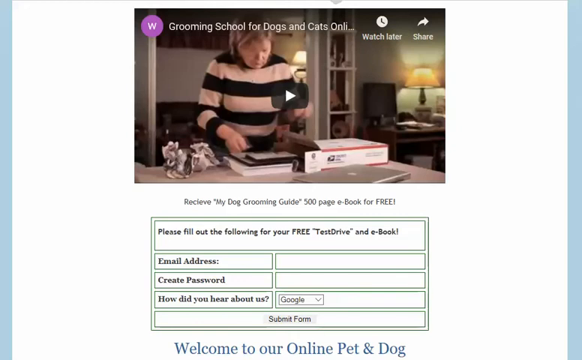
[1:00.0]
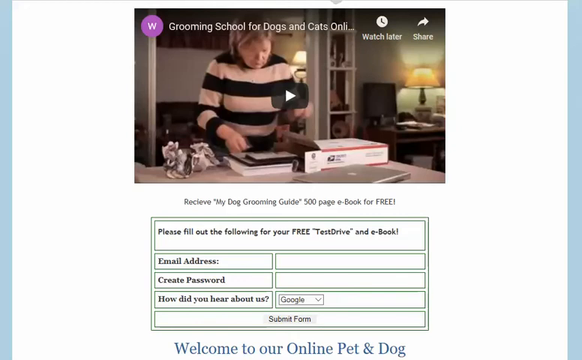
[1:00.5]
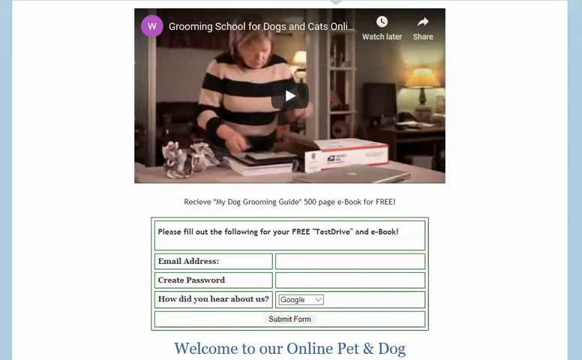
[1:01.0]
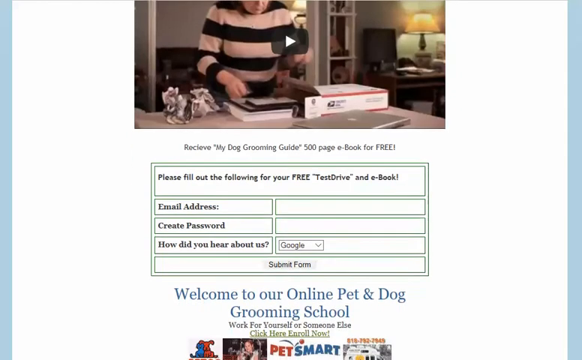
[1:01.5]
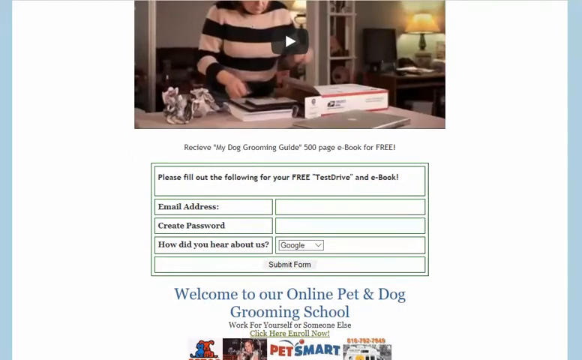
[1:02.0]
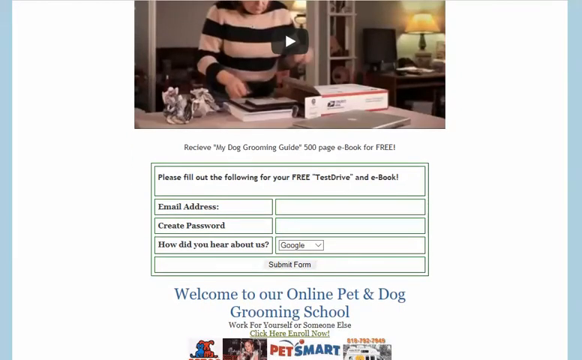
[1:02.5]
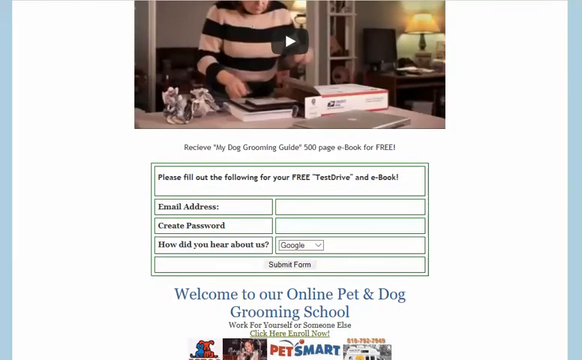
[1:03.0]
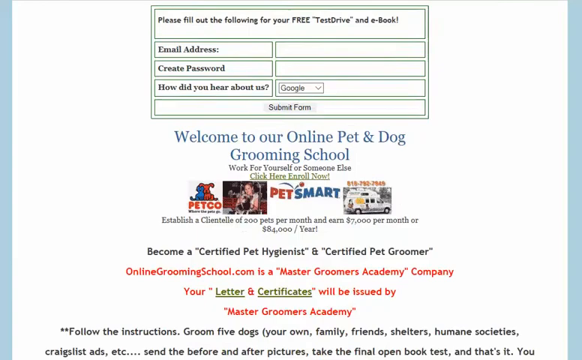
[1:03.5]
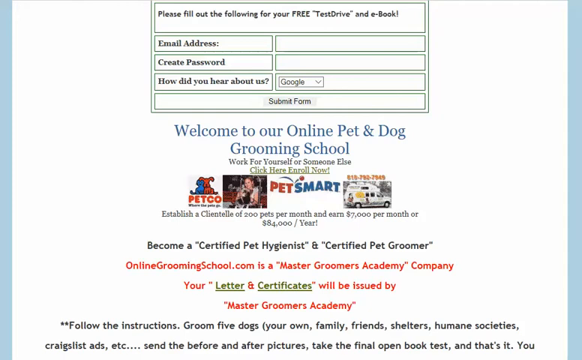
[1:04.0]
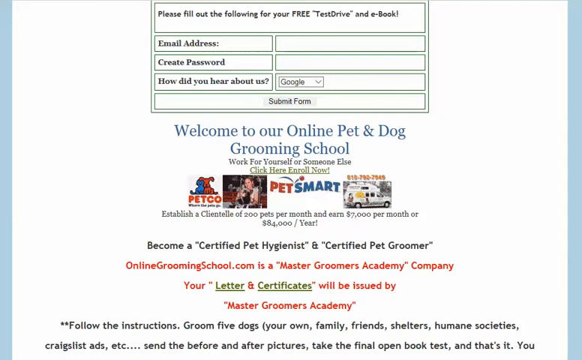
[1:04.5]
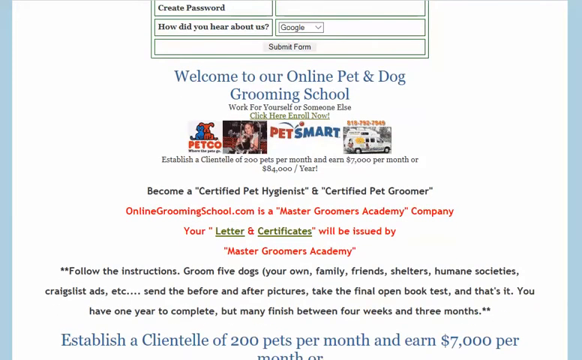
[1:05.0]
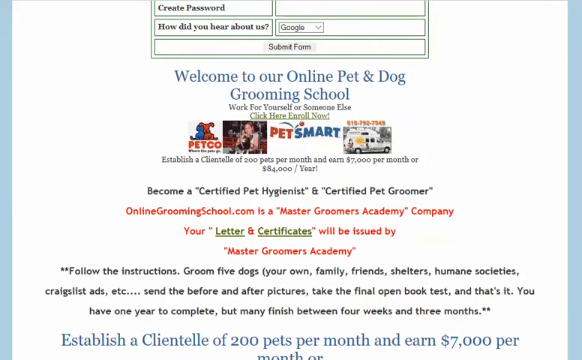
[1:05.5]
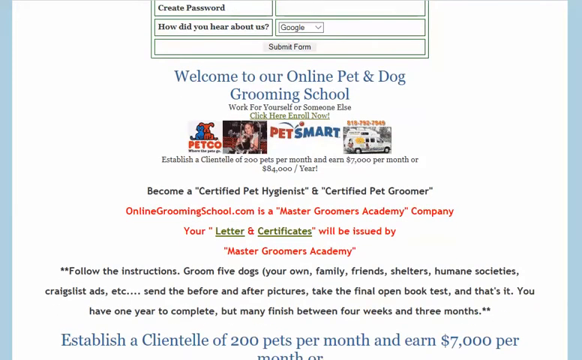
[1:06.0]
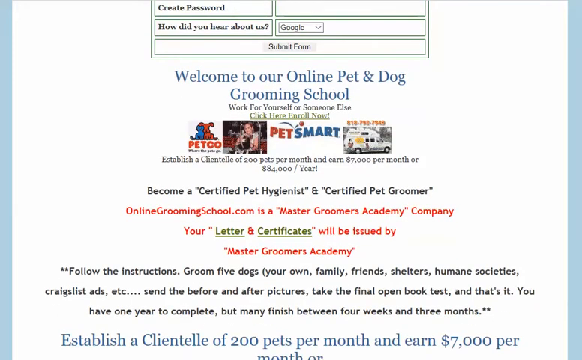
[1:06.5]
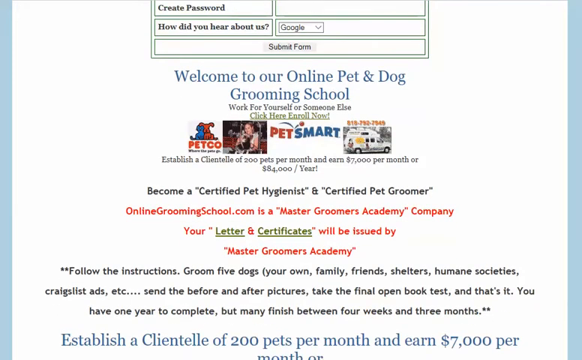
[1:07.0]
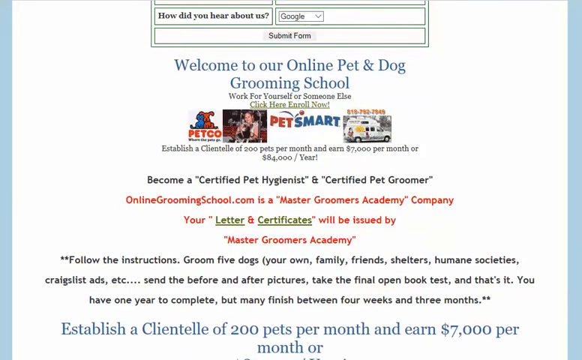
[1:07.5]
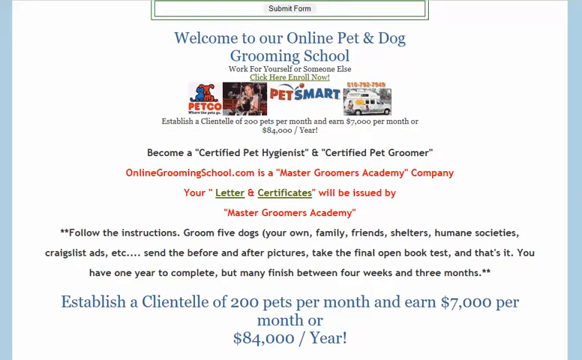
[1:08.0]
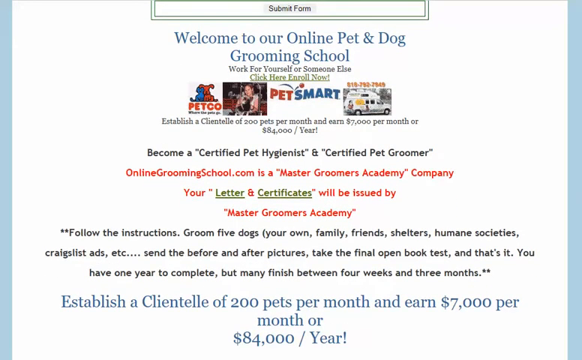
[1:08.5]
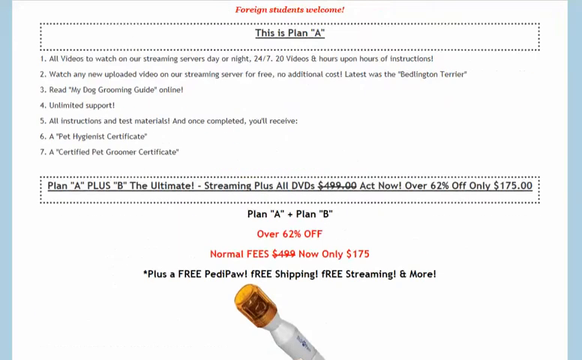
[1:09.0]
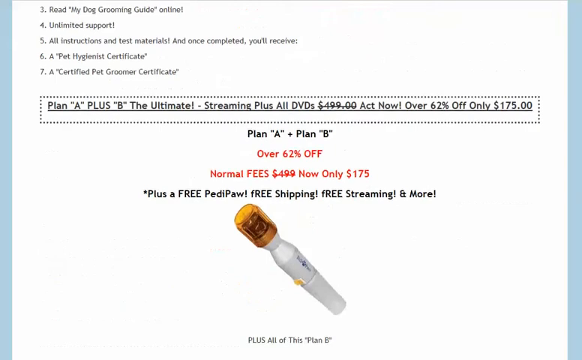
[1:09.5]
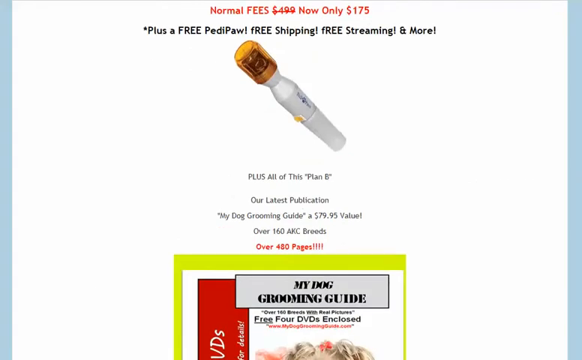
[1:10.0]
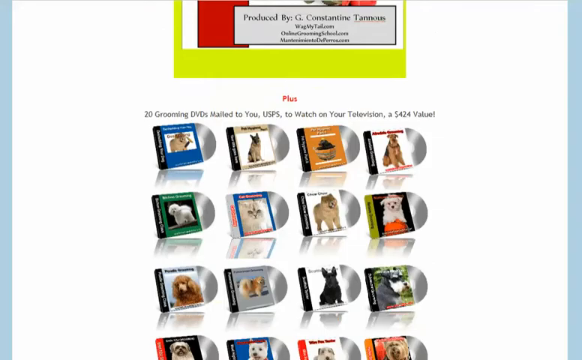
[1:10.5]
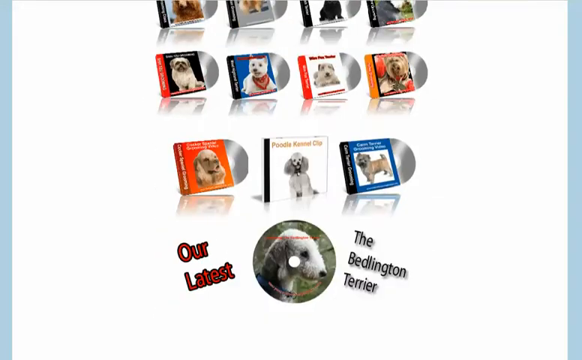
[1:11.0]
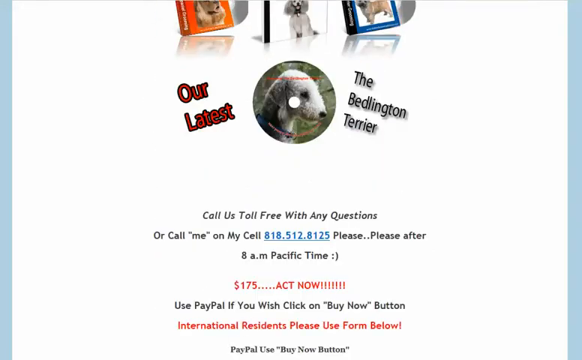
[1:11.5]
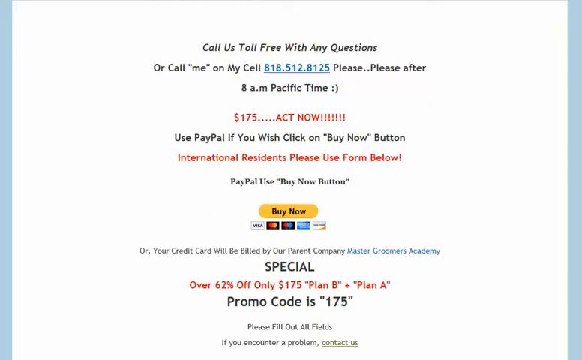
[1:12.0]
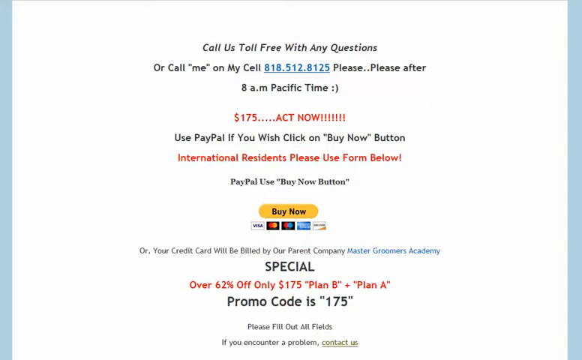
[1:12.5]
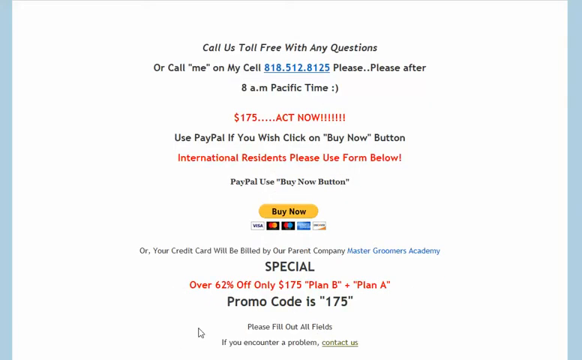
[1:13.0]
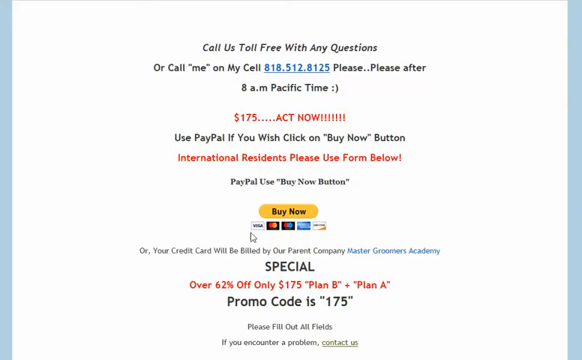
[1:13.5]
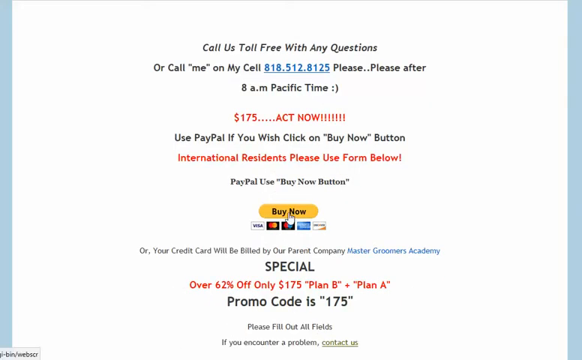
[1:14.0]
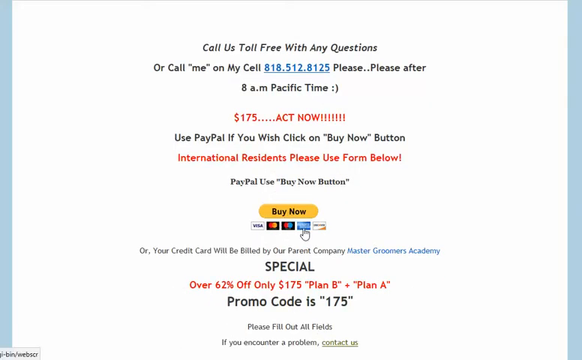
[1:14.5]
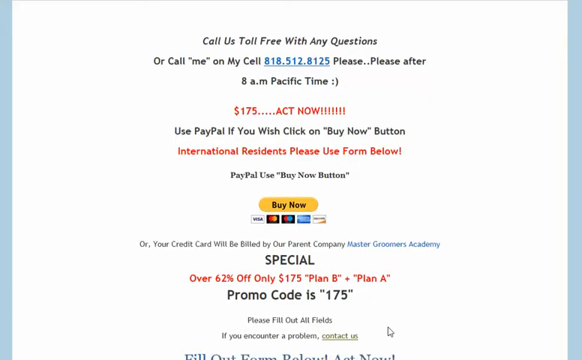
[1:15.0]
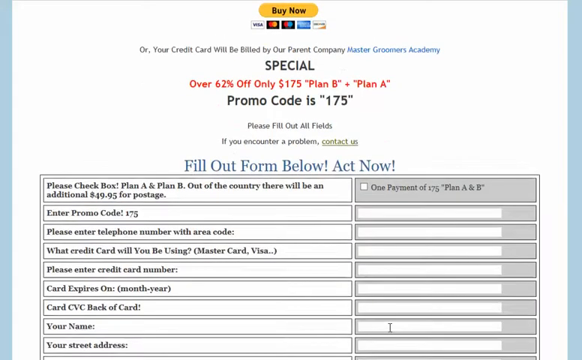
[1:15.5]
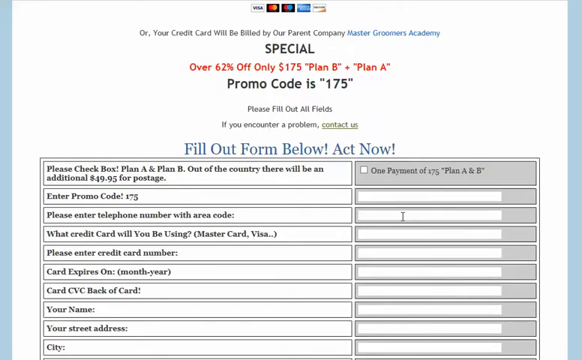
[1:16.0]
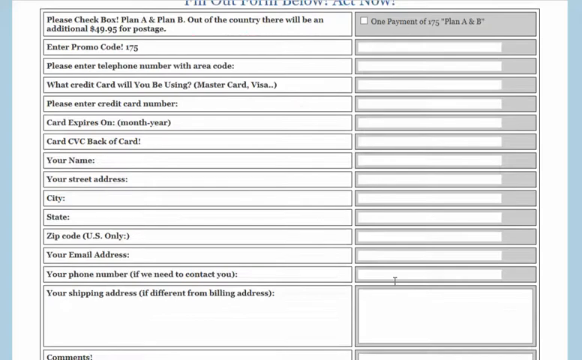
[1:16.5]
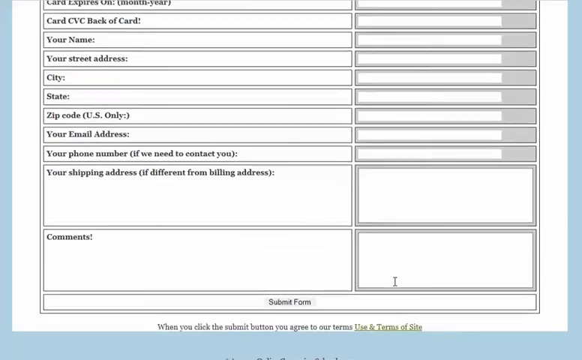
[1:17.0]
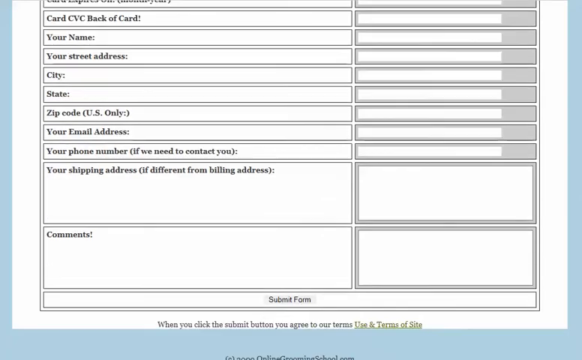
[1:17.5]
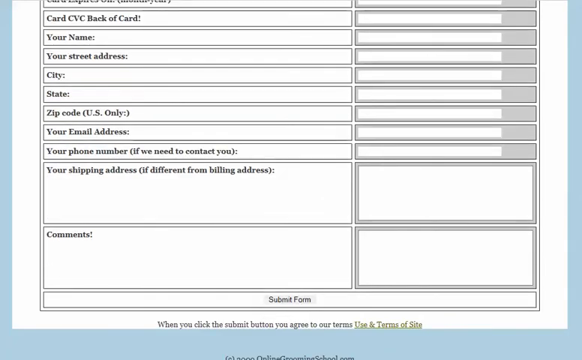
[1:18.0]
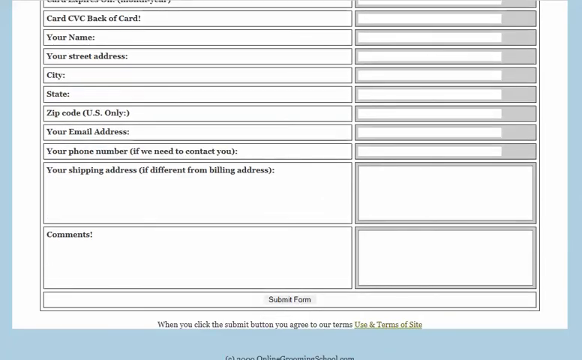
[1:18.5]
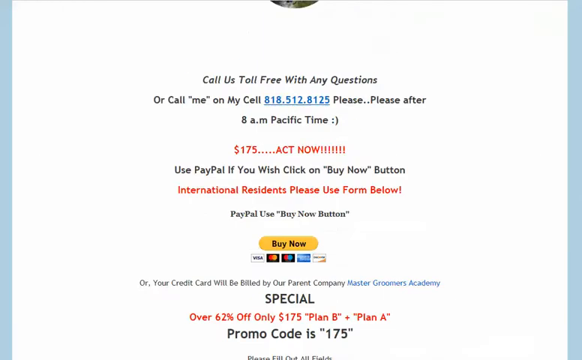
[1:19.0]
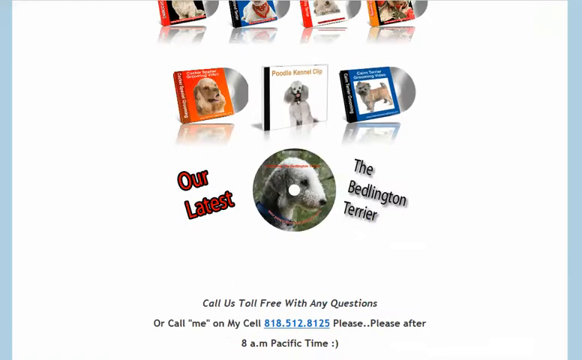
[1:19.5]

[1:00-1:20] The website scrolls on past the submission form for the free test drive and e-book to more details about the online pet grooming school. Under the heading "become a certified pet hygienist and certified pet groomer" the text reads: "OnlineGroomingSchool.com is a Master Groomers Academy company. Your letter and certificates will be issued by the Master Groomers Academy. Follow the instructions, groom five dogs, your own family, friends, shelters, humane societies, craiglist, ads, etc. Send the before and after pictures. Take the final open book test. That's it. You have one year to complete but many finish within four weeks and three months. Establish a clientele of 200 pets per month and earn $7,000 per month or $84,000 per year. Foreign students are welcome." Plan A is listed: "All videos to watch on our streaming service, day or night, 24-7. 20 videos and hours upon hours of instructions. Watch any new uploaded video on our streaming server for free. No additional costs. Latest was the Bedlington Terrier. Read my dog grooming guide online. Unlimited support. All instructions and test materials." Once completed, a Pet Hygienist Certificate and a Certified Pet Groomer Certificate are received. Details of Plan A plus B follow: "the ultimate, streaming plus all DVDs. Act now over 62% off only £175", plus a free item, free shipping, streaming and more. The page scrolls quickly past DVDs, including the latest one about the Bedlington Terrier. The mouse hovers over the Buy Now button at the bottom, showing the credit cards that can be used. Another form asks which plan is required and has fields for a promotion code, telephone number, credit card details, name, address, email address, phone number, a shipping address if different, and any comments.